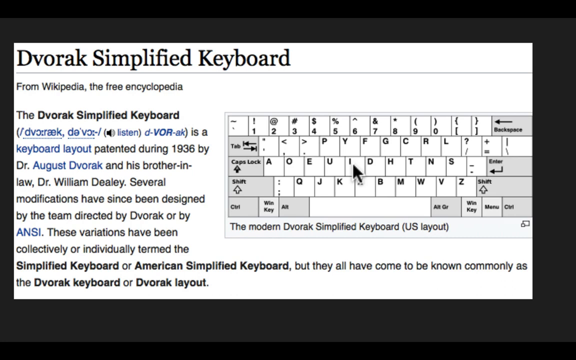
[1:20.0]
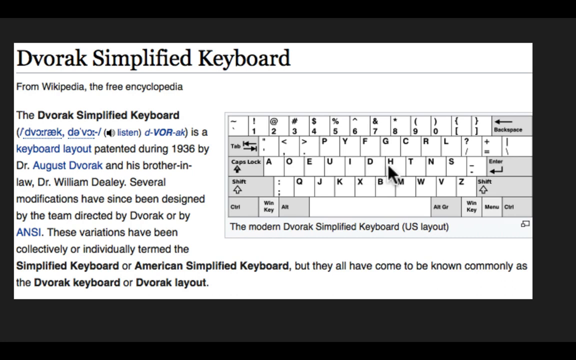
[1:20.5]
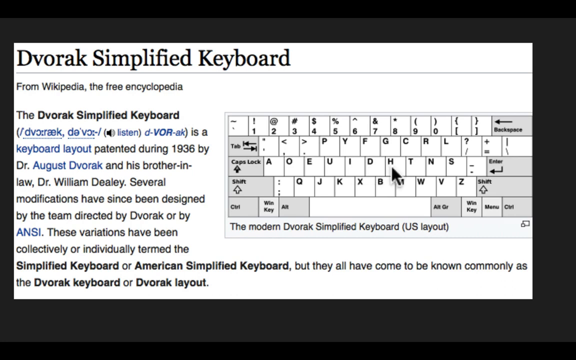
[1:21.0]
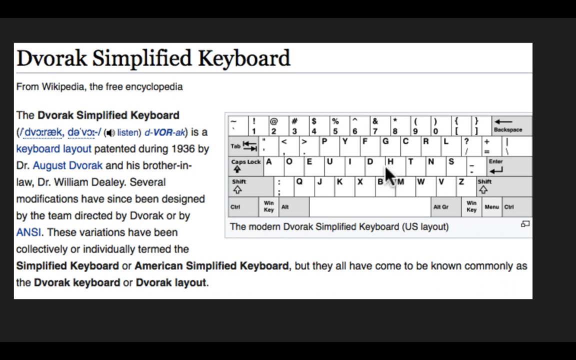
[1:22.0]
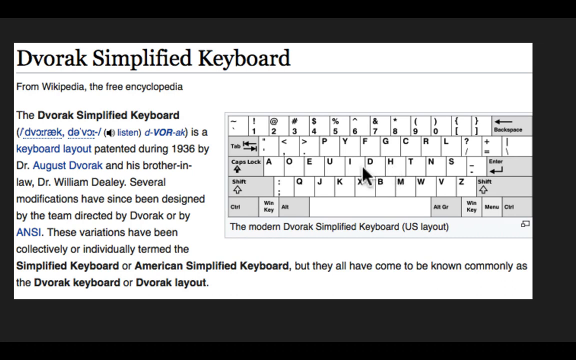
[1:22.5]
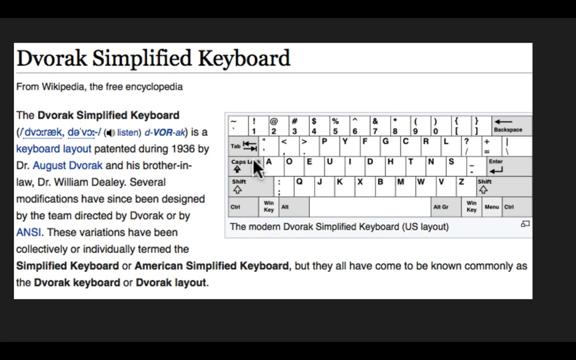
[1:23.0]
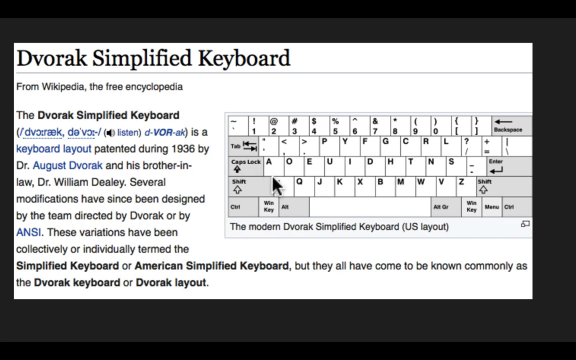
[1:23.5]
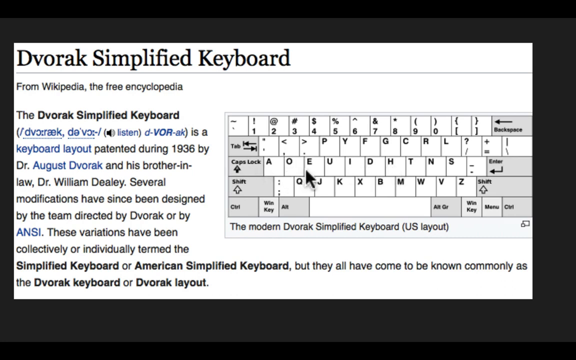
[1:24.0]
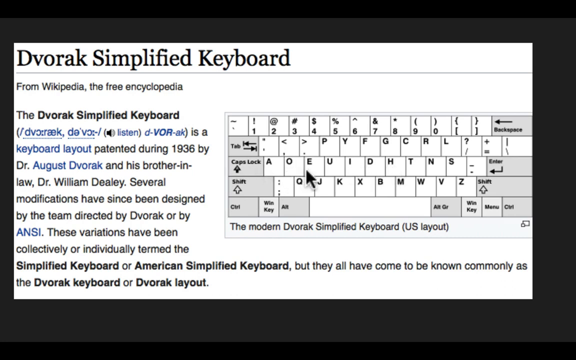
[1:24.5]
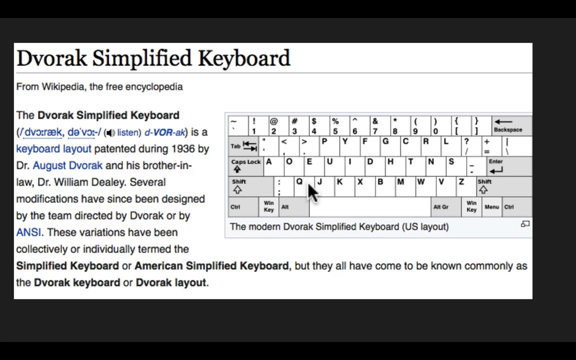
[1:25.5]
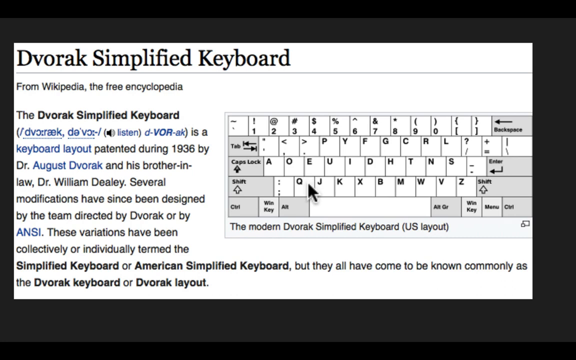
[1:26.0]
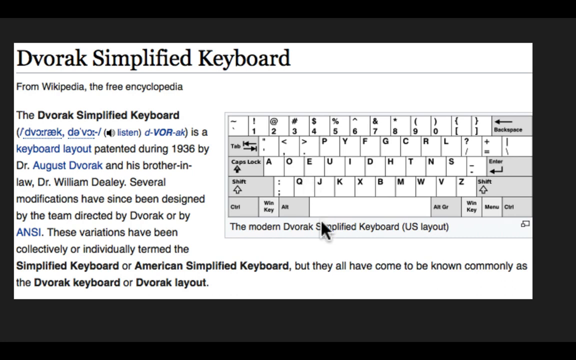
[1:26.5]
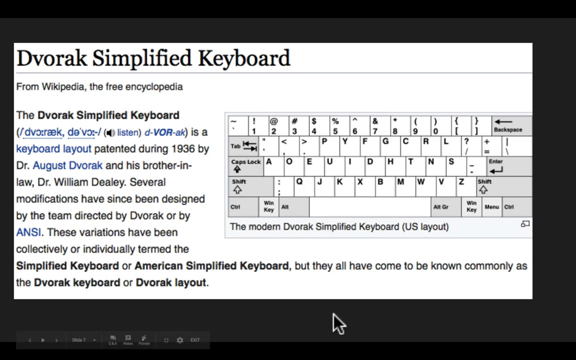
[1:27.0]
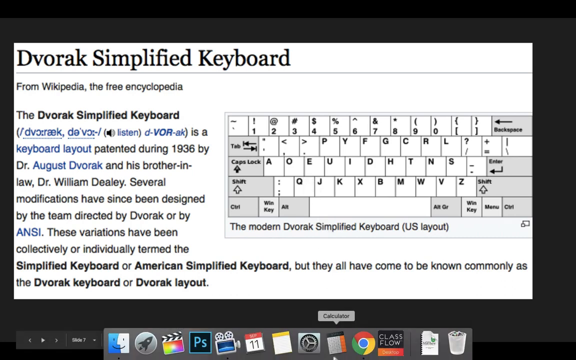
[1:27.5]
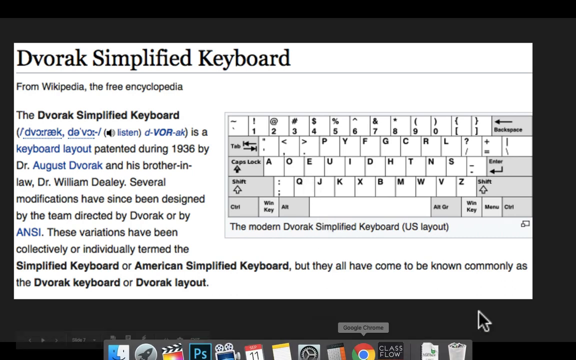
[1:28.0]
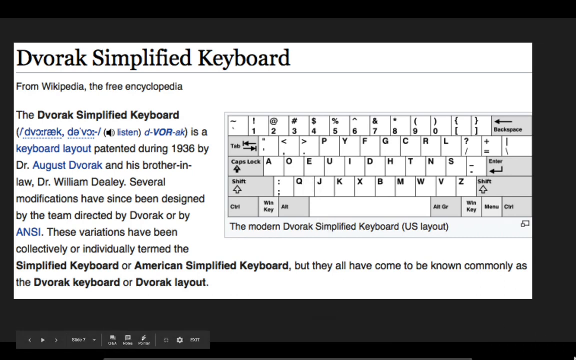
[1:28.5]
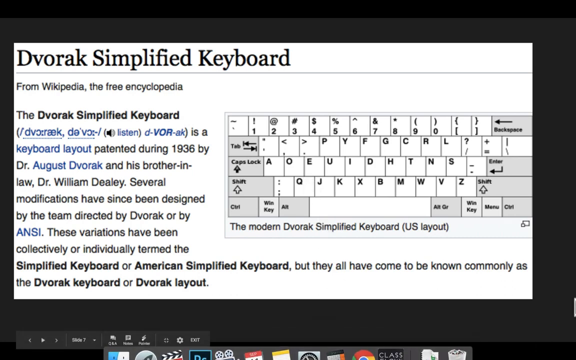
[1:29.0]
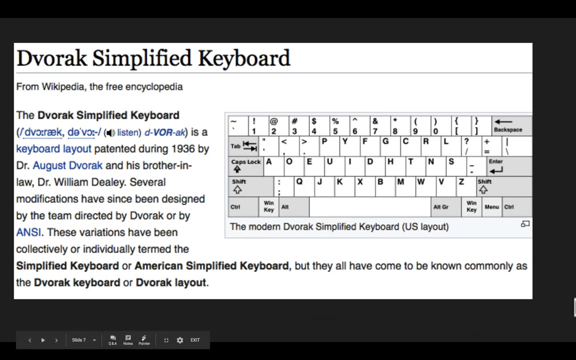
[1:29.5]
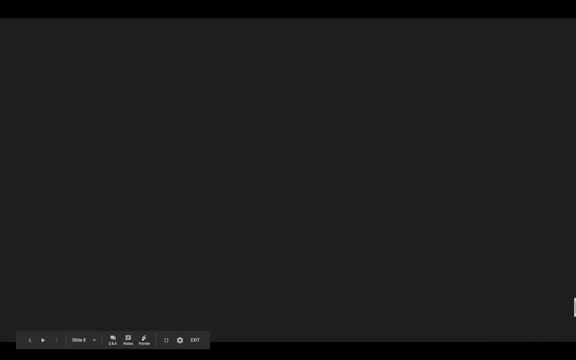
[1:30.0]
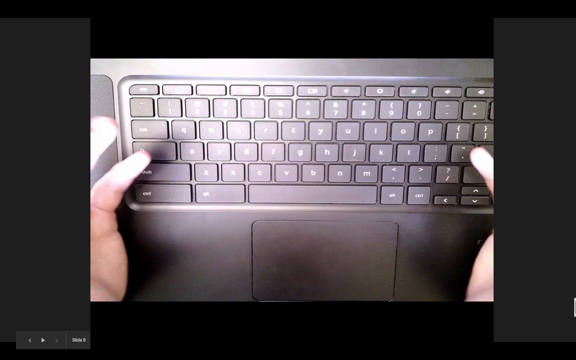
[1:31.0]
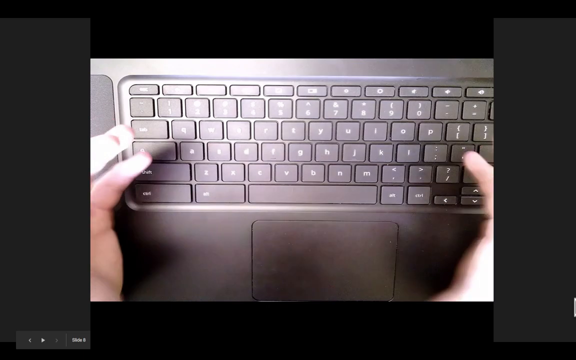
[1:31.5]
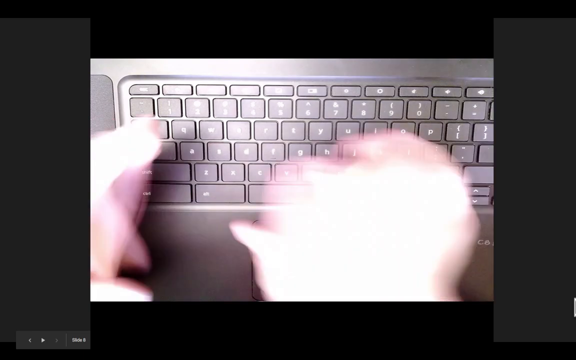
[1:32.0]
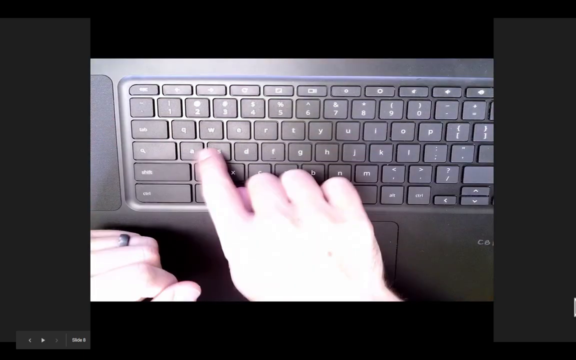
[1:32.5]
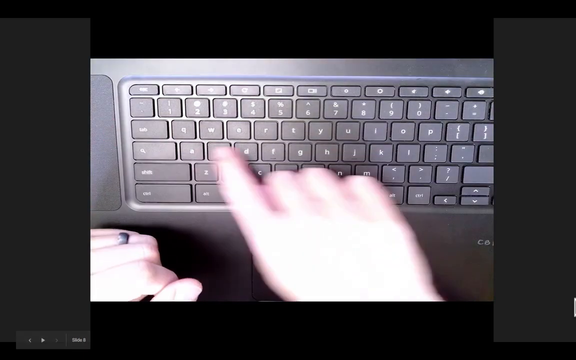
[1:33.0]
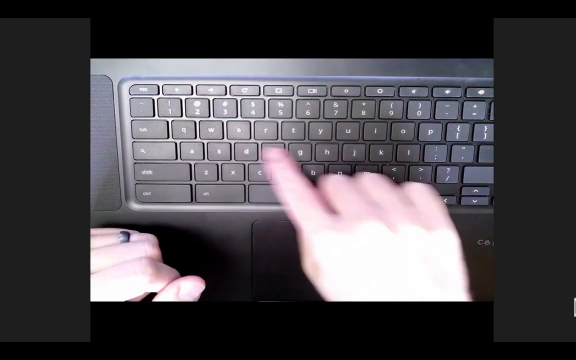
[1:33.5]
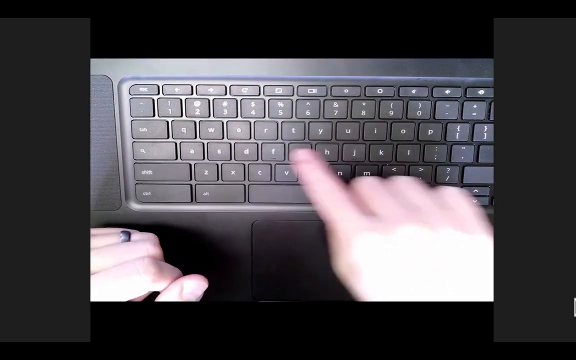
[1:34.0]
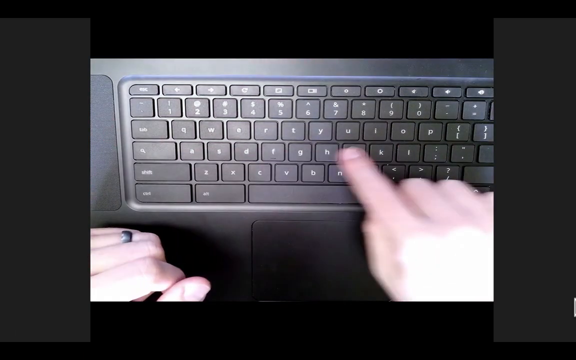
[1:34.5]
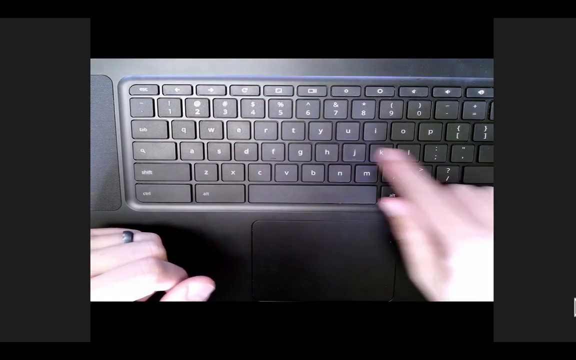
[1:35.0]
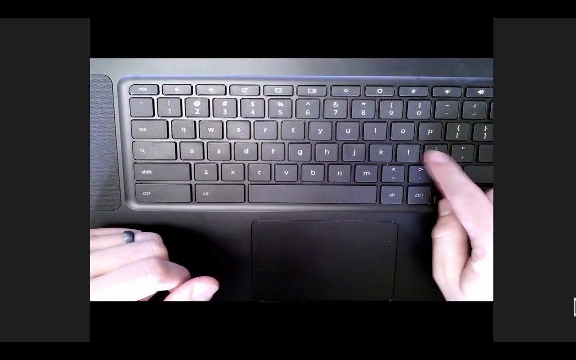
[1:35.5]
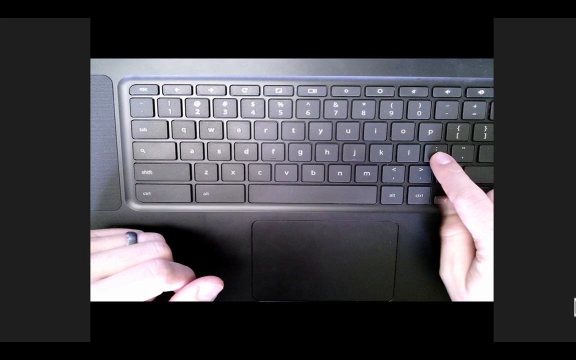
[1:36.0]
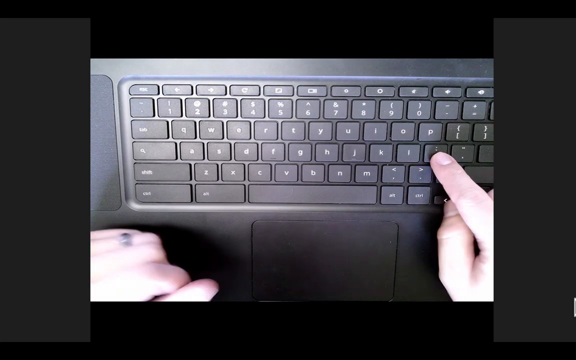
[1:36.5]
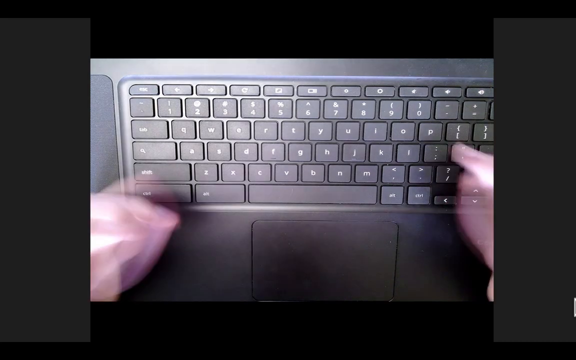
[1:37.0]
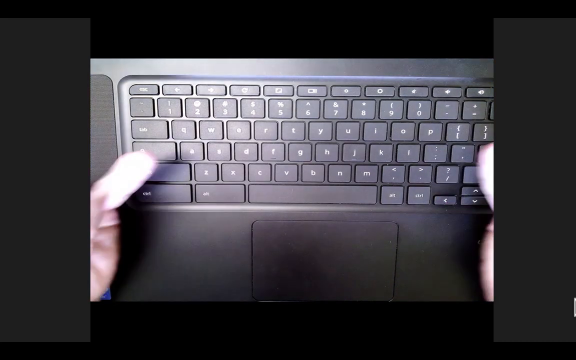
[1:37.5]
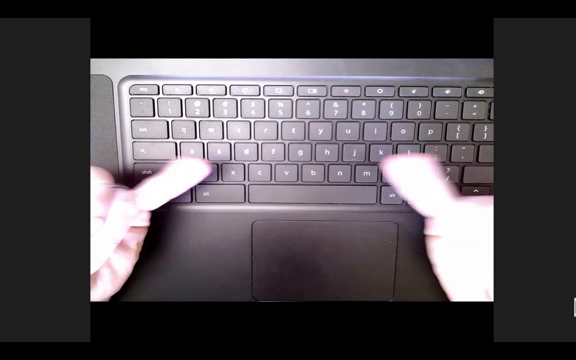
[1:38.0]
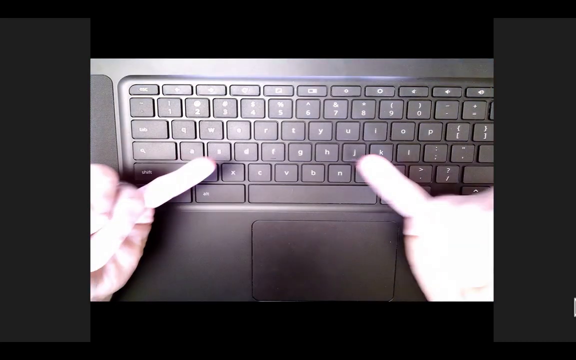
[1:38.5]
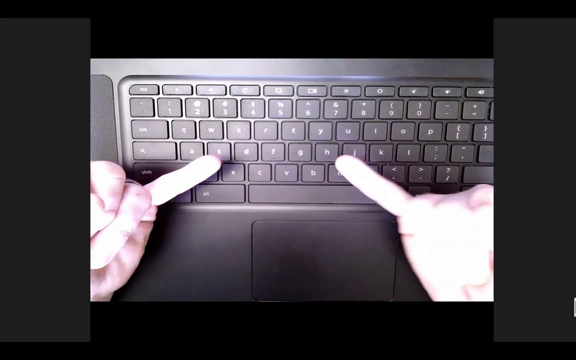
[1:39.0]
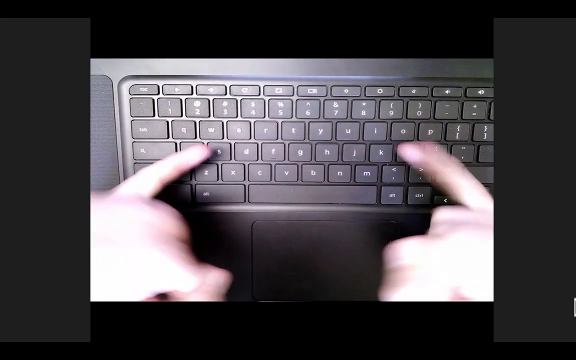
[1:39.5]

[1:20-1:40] A keyboard appears with a definition beside it. A cursor hovers over the definition on one side and also over the keyboard, pointing at the keys A, S, D, F and J, K, L. A physical QWERTY keyboard is shown with a human hand holding it and pressing the special keys, A, S, D, F and then the J and K keys. A visual keyboard has black keys, with the special keys colored differently; they press in a systematic order, one after another, without any human interference. There is also a drawing of a left and a right human hand: the left hand rests on A, S, D and F, while the right hand rests on J, K, L and one unnamed key.